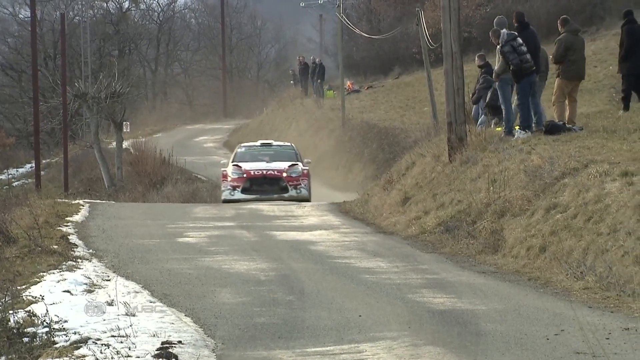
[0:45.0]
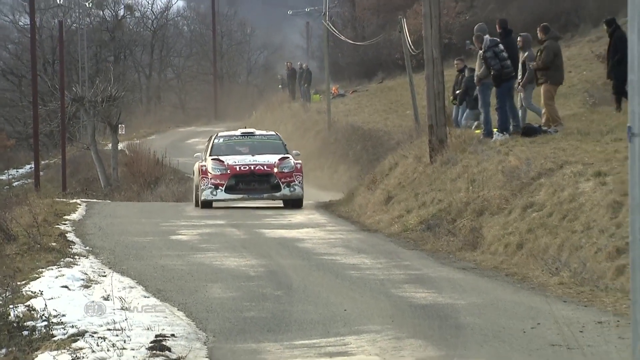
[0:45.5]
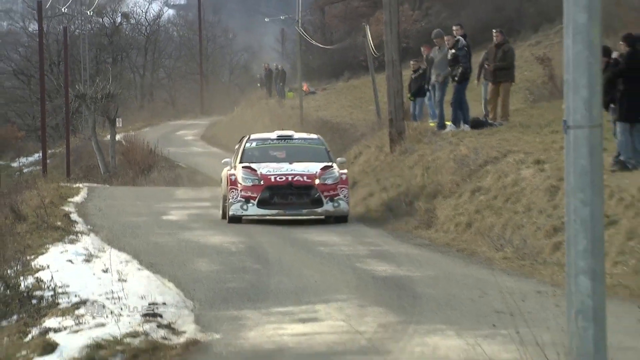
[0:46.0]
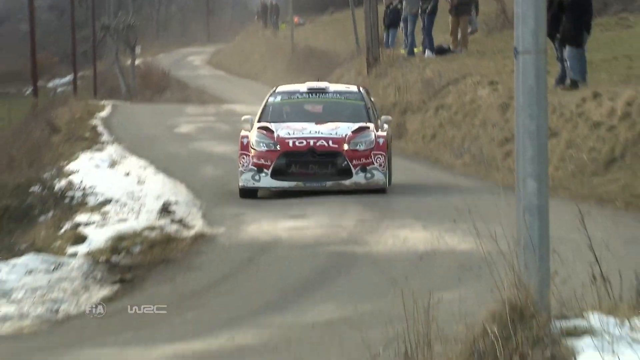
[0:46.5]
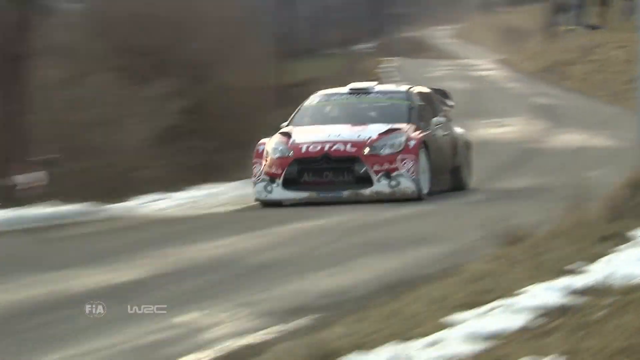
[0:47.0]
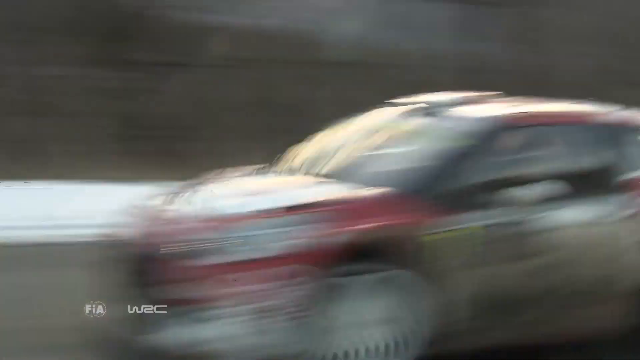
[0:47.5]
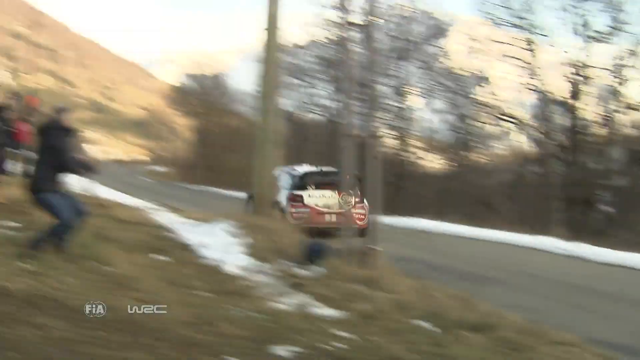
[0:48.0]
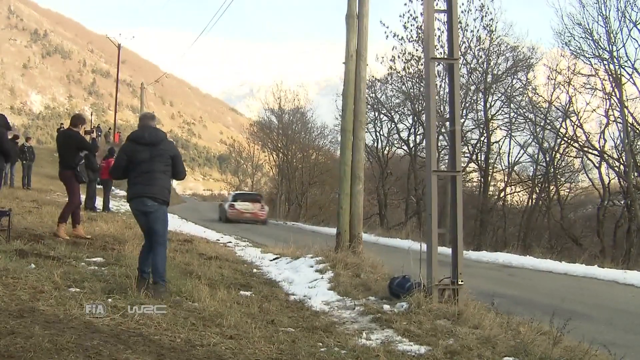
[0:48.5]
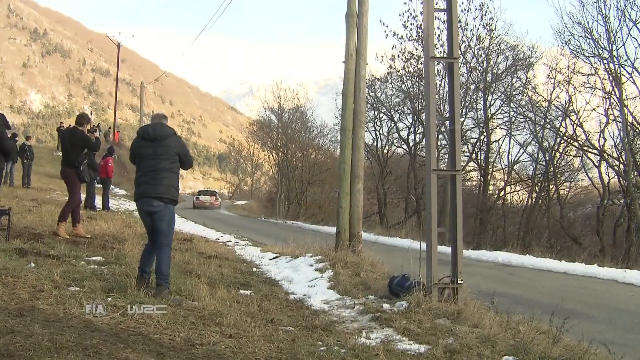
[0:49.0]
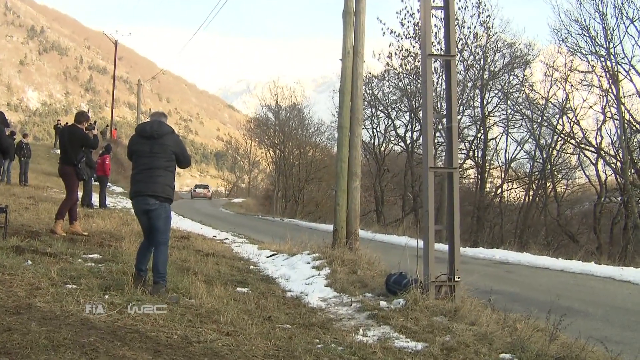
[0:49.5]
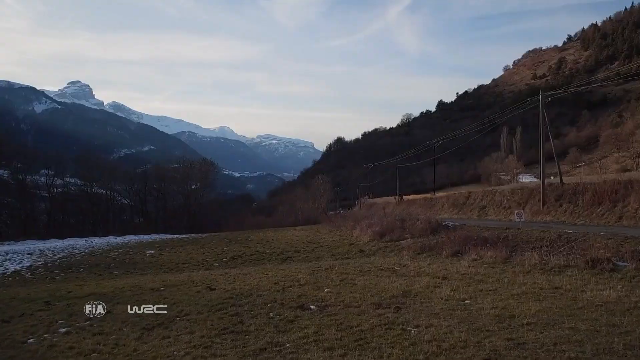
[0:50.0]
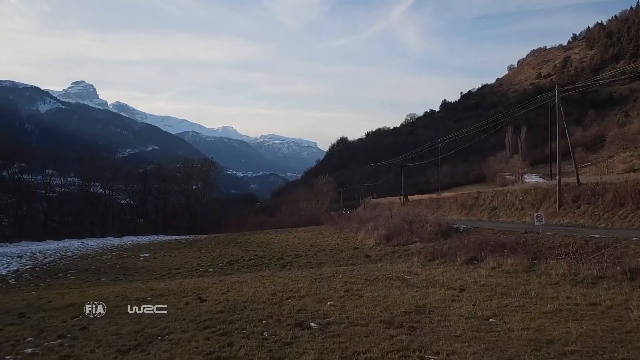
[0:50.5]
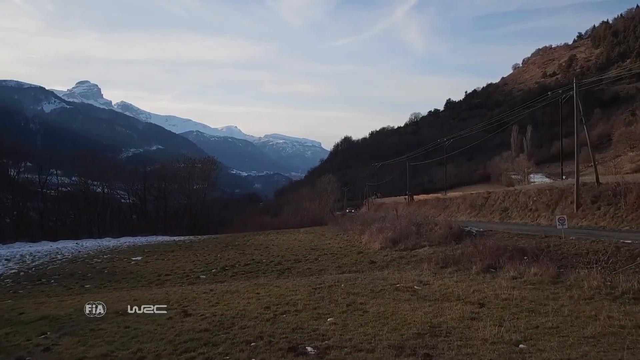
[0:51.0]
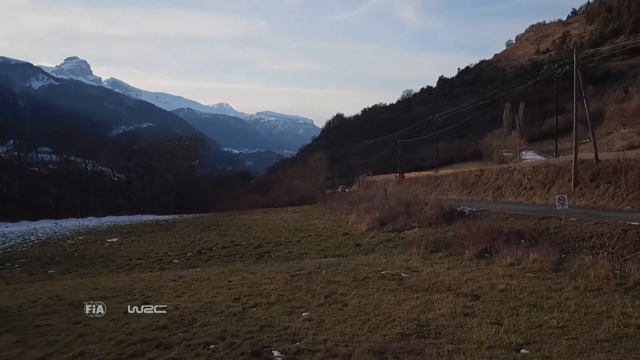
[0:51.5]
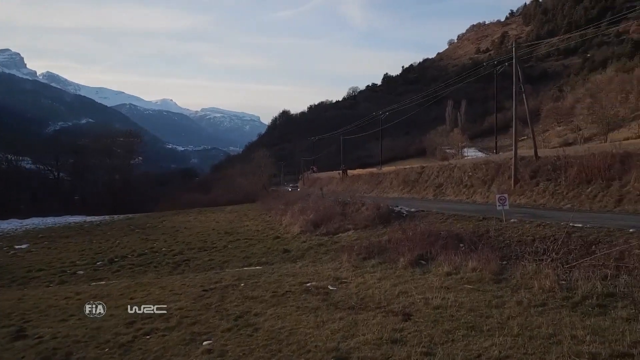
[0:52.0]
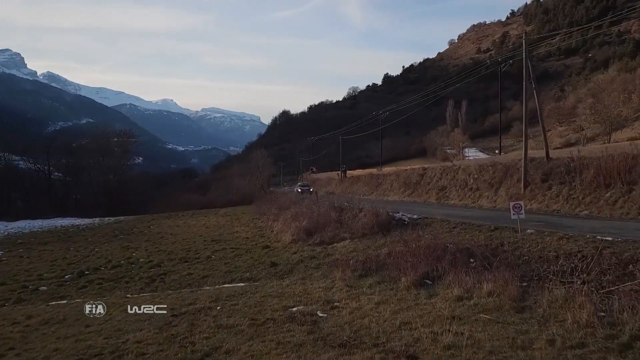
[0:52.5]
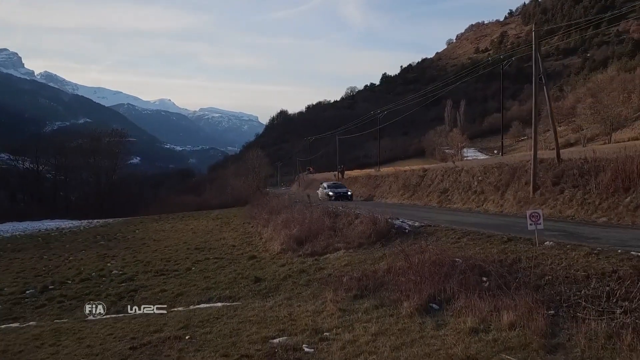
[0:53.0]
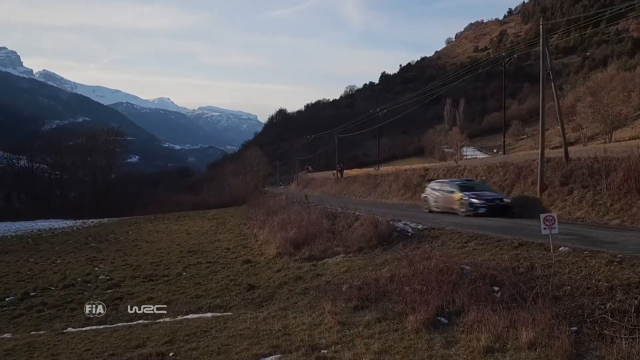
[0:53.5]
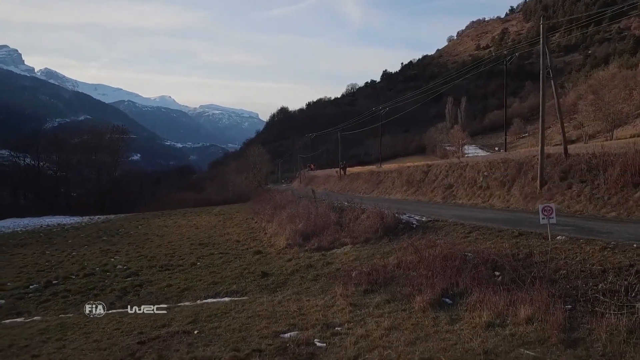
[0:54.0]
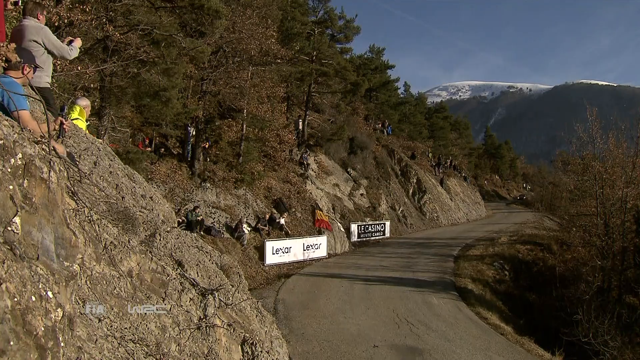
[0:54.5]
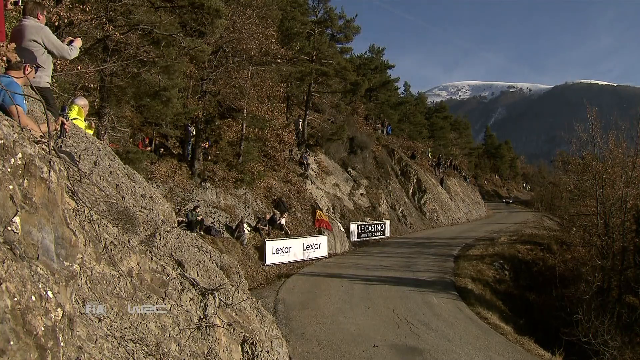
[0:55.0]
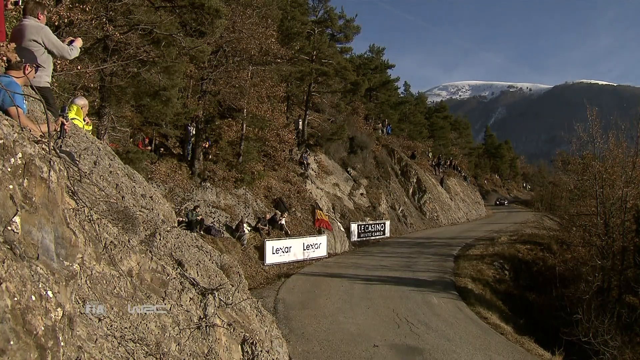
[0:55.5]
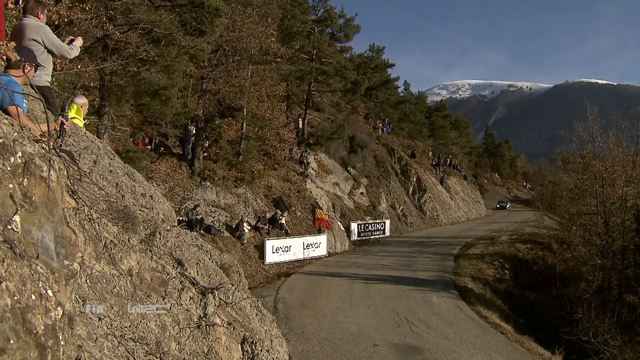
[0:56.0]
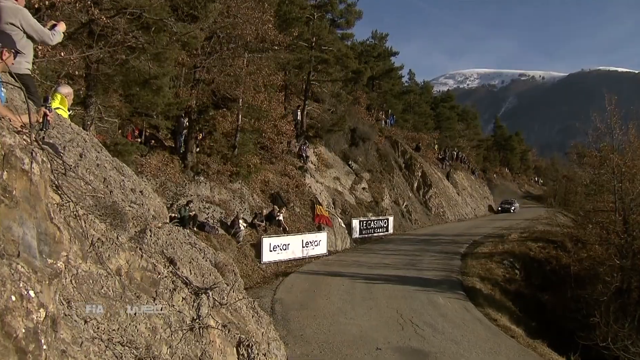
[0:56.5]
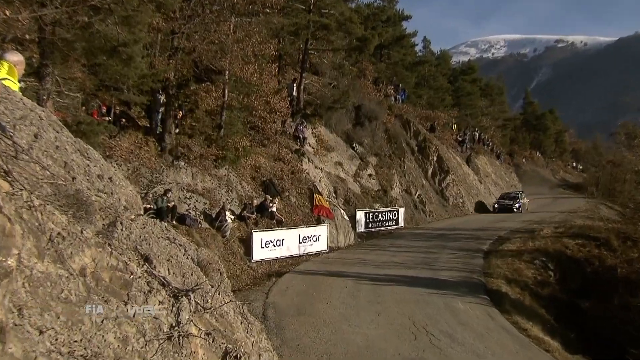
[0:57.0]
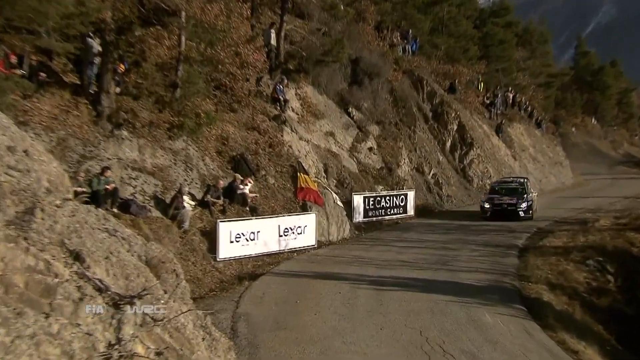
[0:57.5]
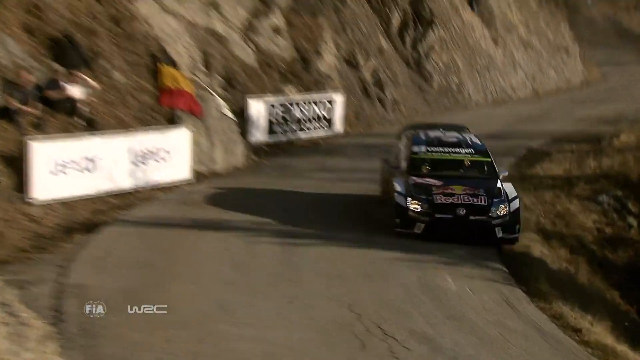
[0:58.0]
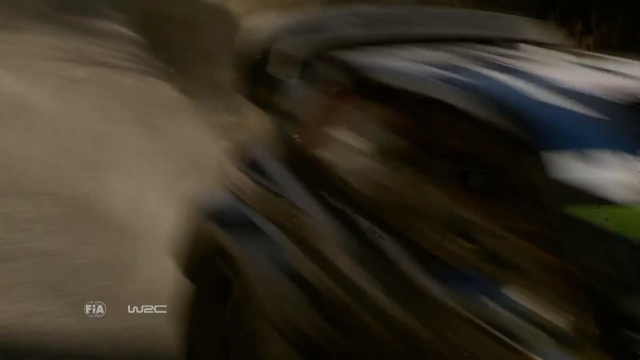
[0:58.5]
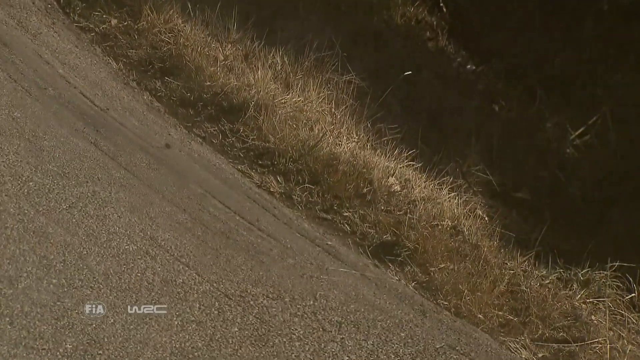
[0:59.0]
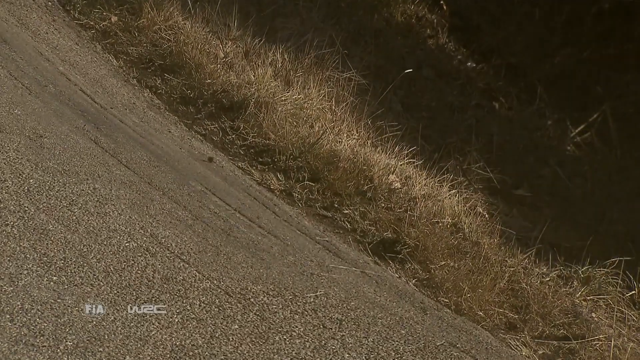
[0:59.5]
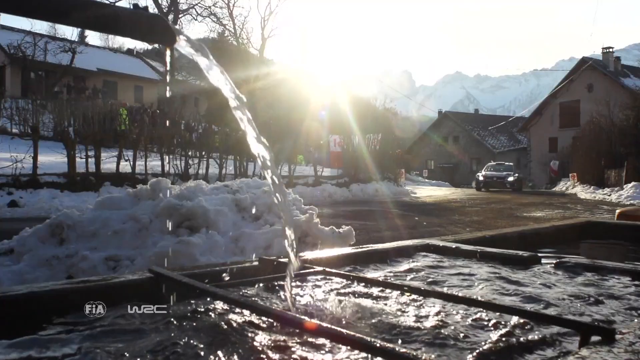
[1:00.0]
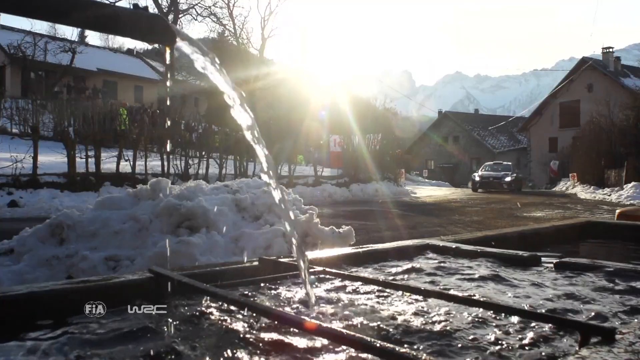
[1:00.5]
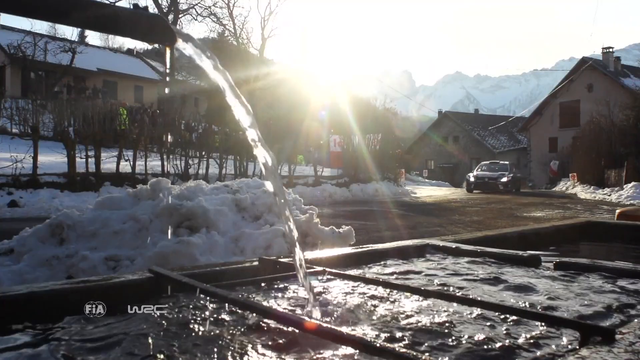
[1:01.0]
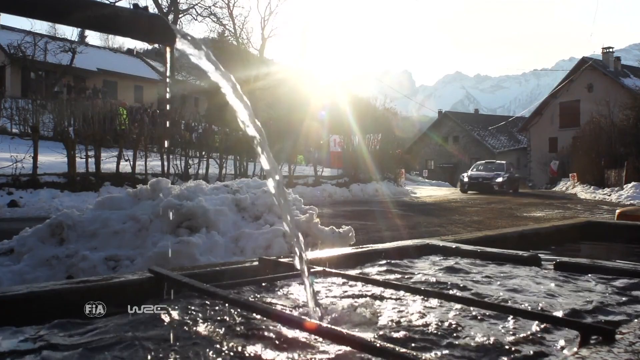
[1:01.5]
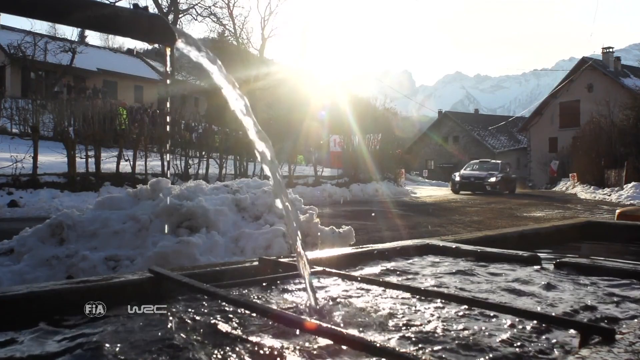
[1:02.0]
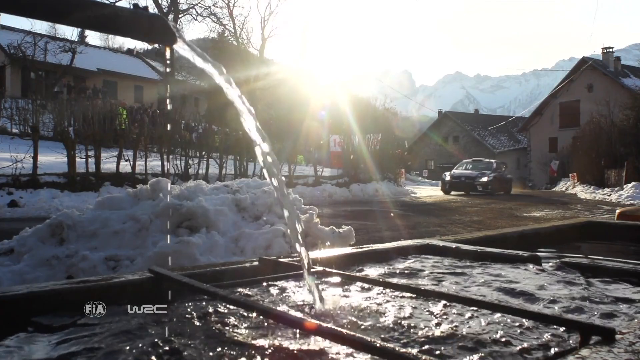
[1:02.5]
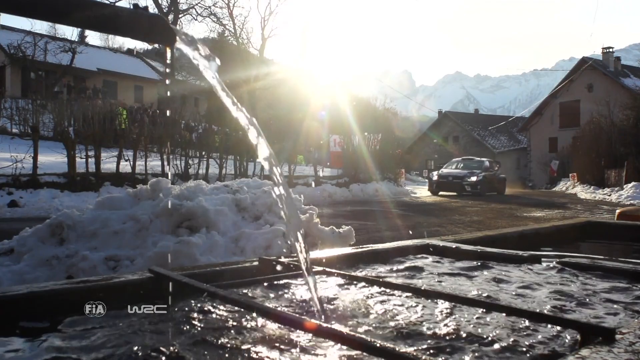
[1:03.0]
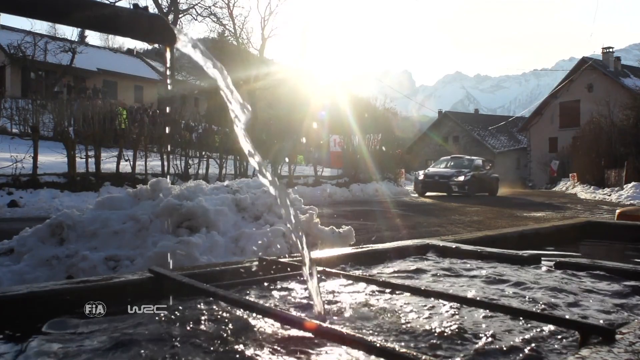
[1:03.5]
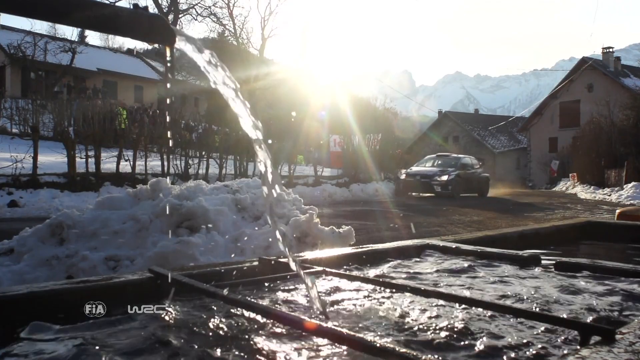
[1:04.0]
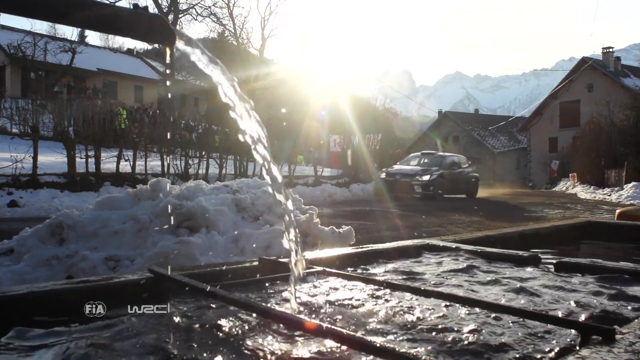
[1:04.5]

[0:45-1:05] A vehicle drives toward the camera. The front of the car has the word "total" written in white on a red background, though the car's primary color is white. The road is very gray. Some snow is on the left side of the scene, but most of it is gone and appears to have melted. A group of people on top of a hill on the right side watch the car go by and turn their heads, and a panning shot follows the vehicle driving toward the left. The video changes to more people on the left side of the road, some taking photos and video of the passing vehicle with cameras and others just watching. The scene then changes to a landscape with large mountains in the background, some with snow on them, and large trees in the background. On the right are telephone poles along what appears to be a road. Very large brownish bushes stand on a greenish-brown field, and the car drives by. Next comes a hillside with sign posters reading "Lavar" and "LA Casino," and people on the left side of the hill watch the cars turn and curve through what seems to be the track. A car then drives slowly through a more town-like area, and the final shot shows a couple of mountains in the background.